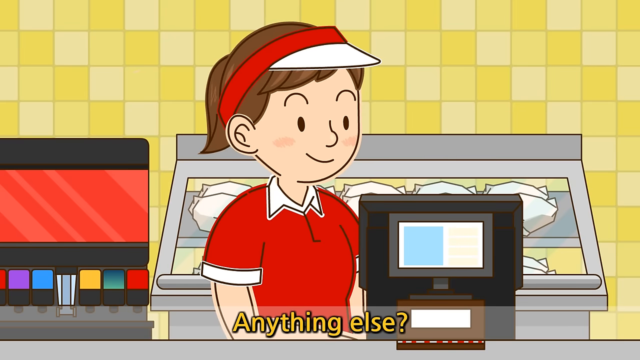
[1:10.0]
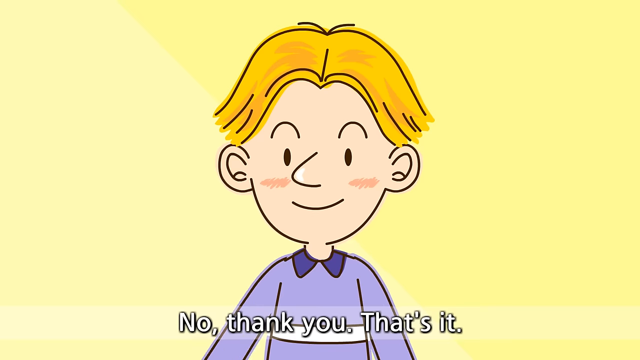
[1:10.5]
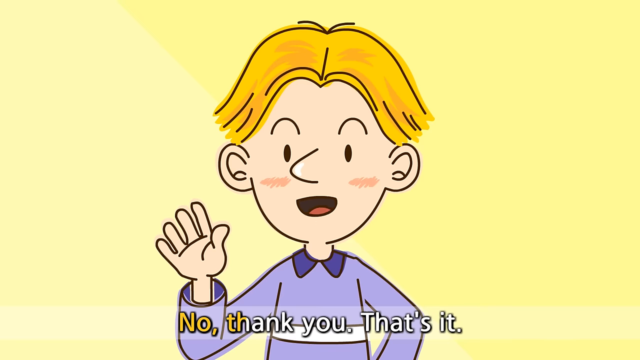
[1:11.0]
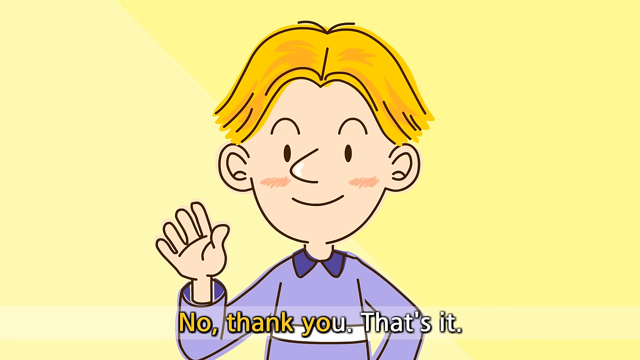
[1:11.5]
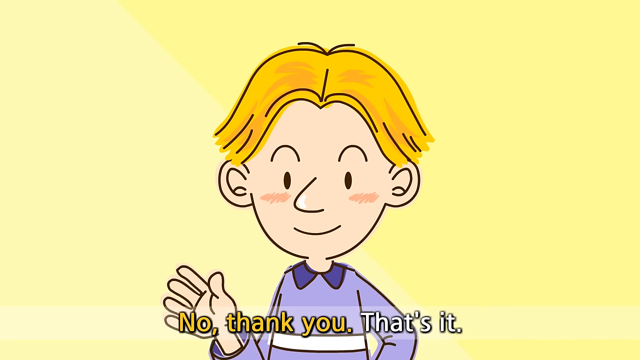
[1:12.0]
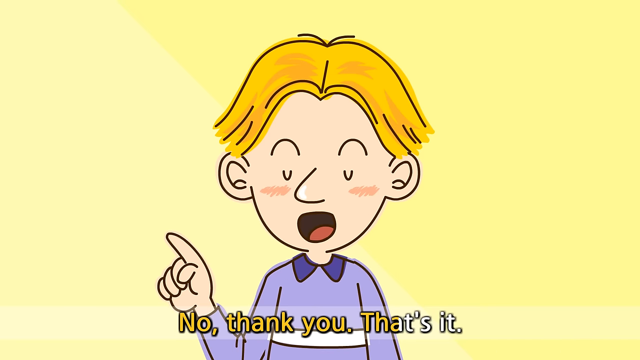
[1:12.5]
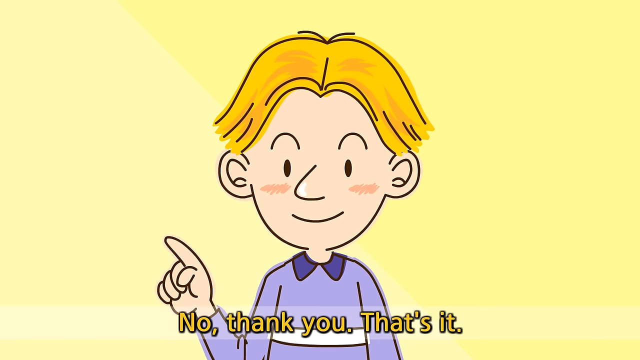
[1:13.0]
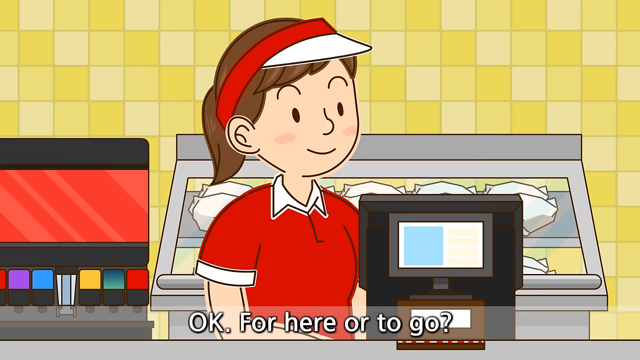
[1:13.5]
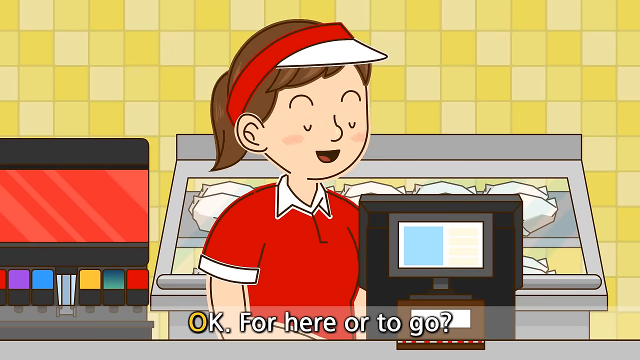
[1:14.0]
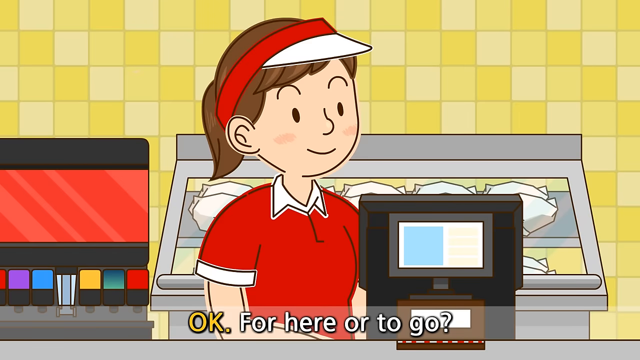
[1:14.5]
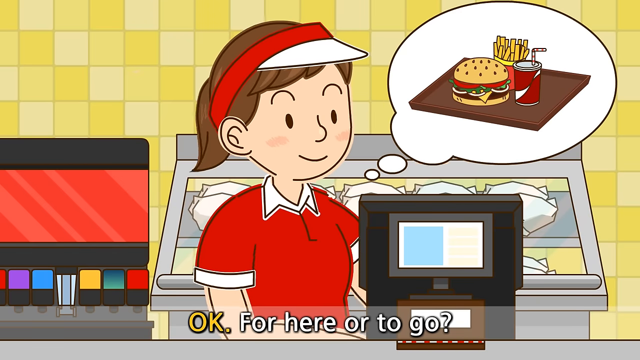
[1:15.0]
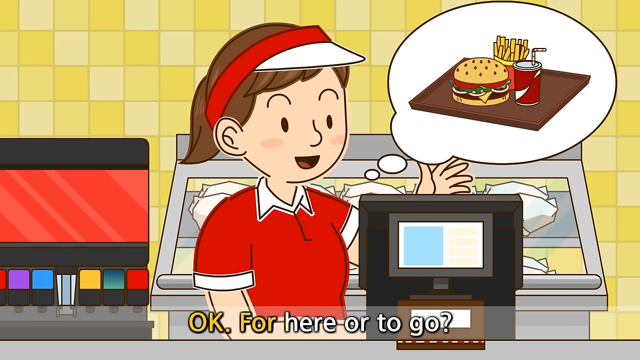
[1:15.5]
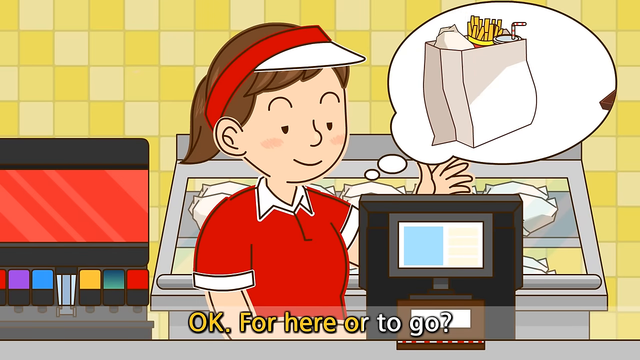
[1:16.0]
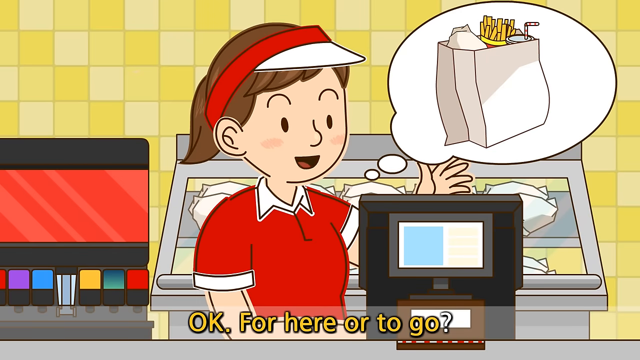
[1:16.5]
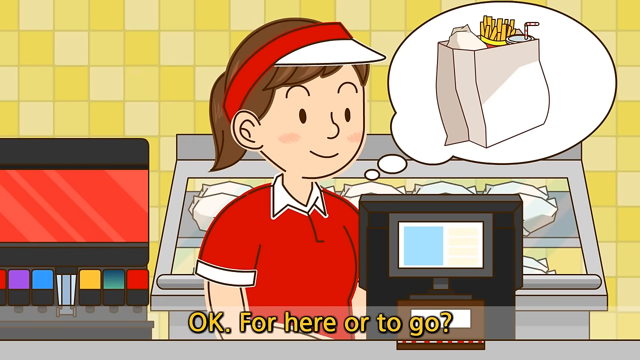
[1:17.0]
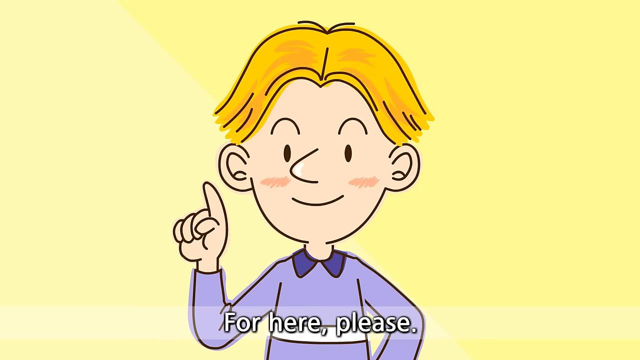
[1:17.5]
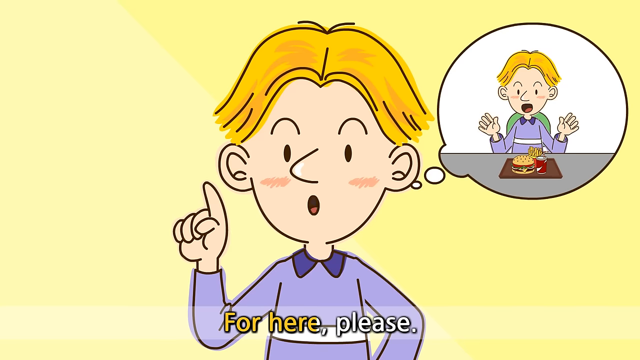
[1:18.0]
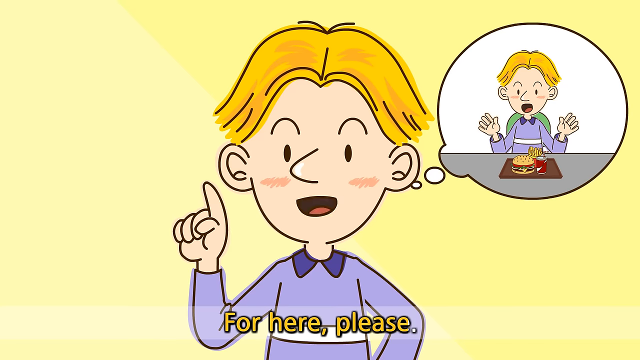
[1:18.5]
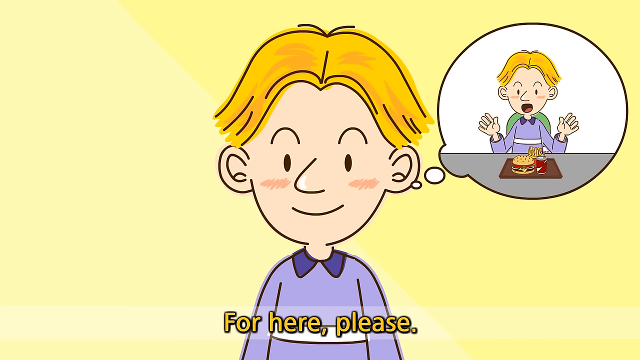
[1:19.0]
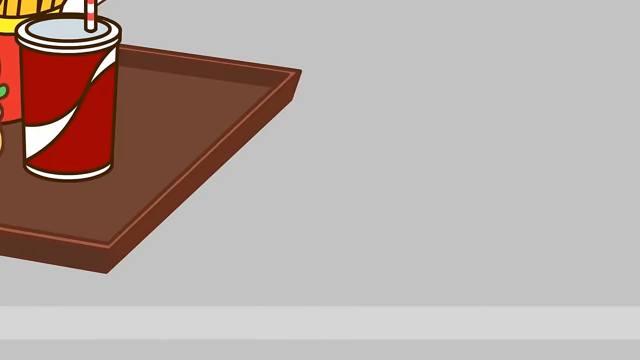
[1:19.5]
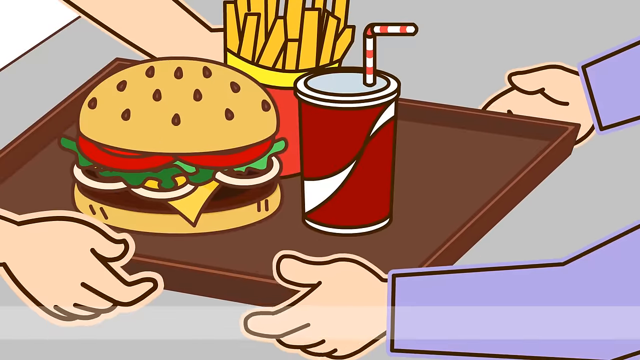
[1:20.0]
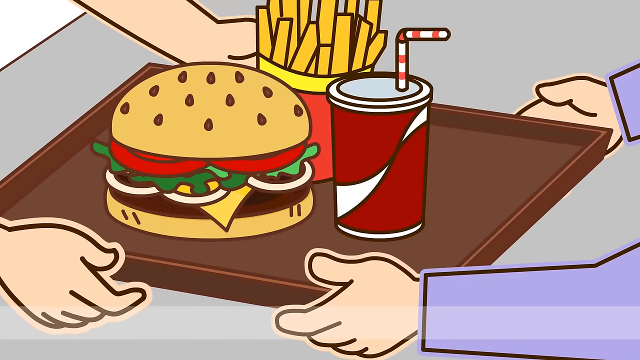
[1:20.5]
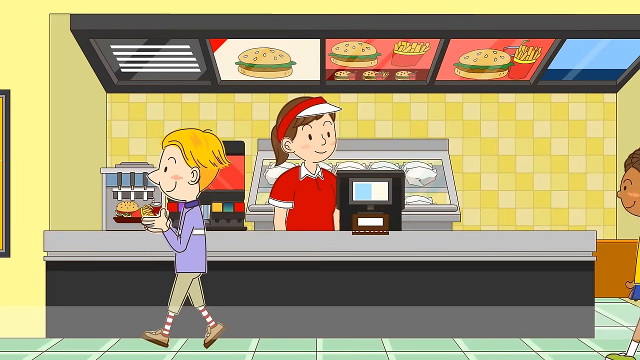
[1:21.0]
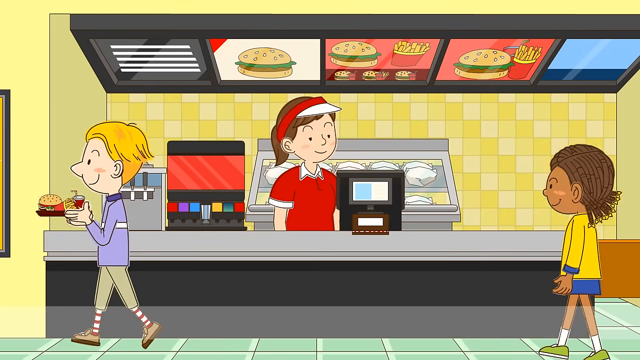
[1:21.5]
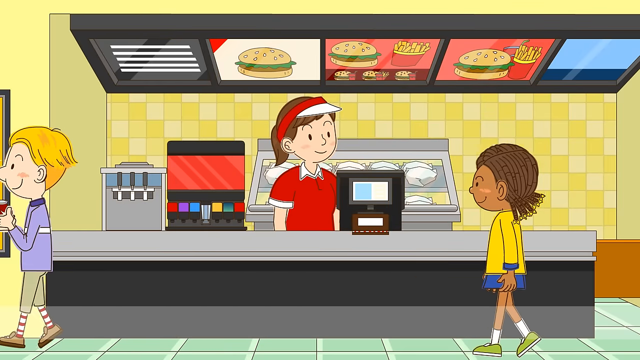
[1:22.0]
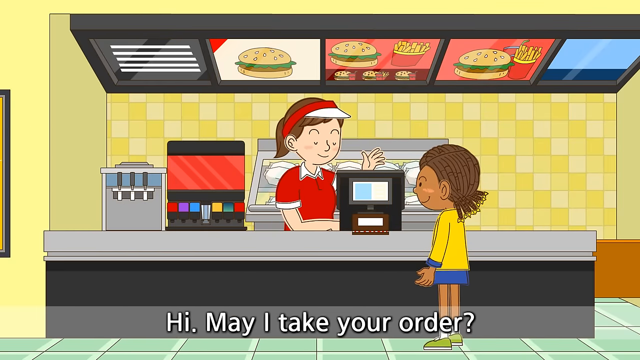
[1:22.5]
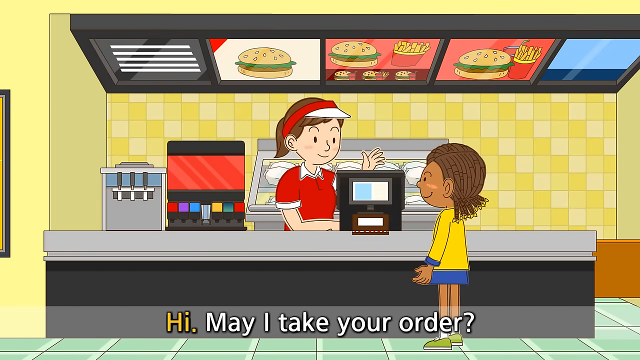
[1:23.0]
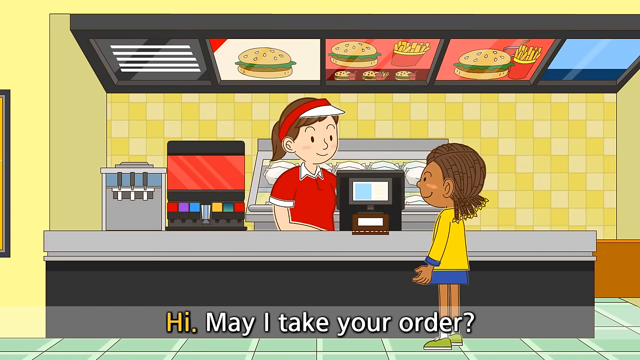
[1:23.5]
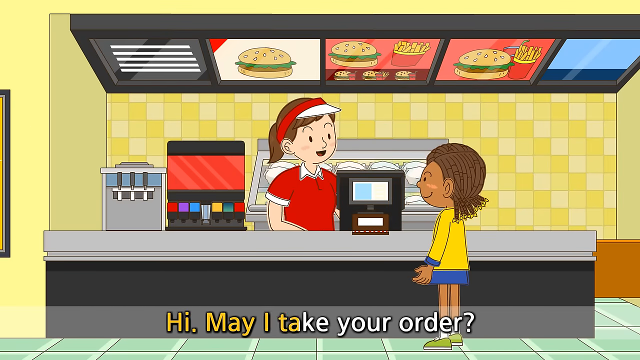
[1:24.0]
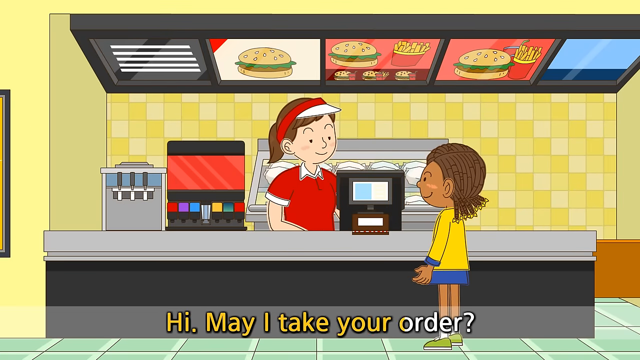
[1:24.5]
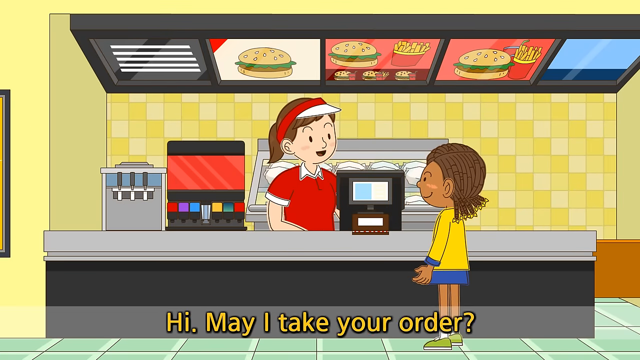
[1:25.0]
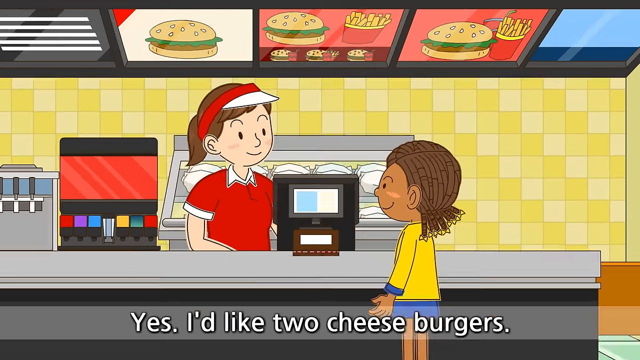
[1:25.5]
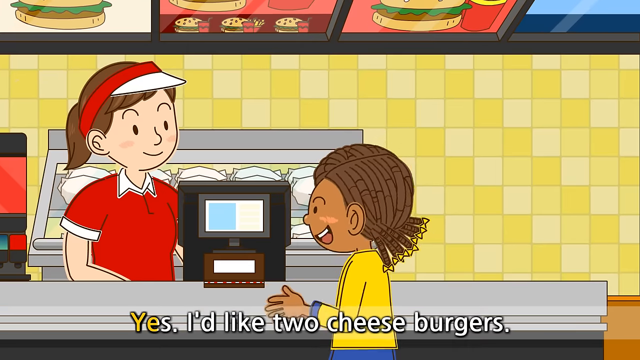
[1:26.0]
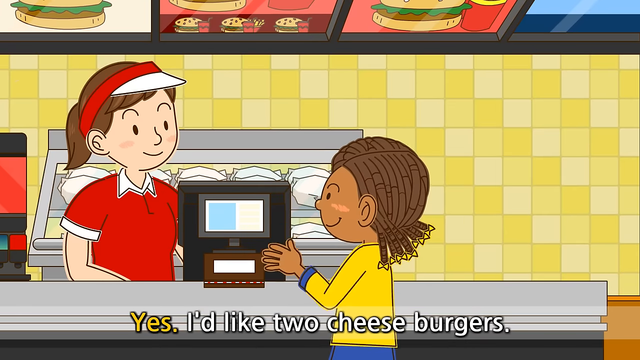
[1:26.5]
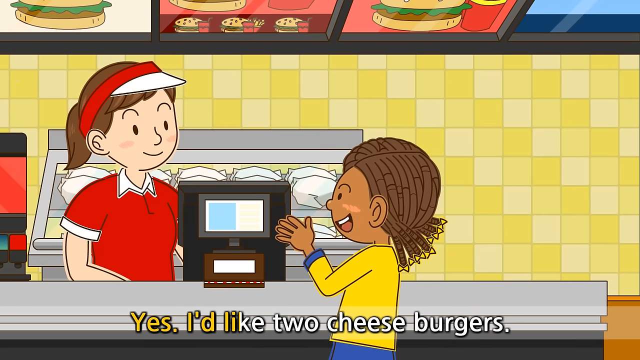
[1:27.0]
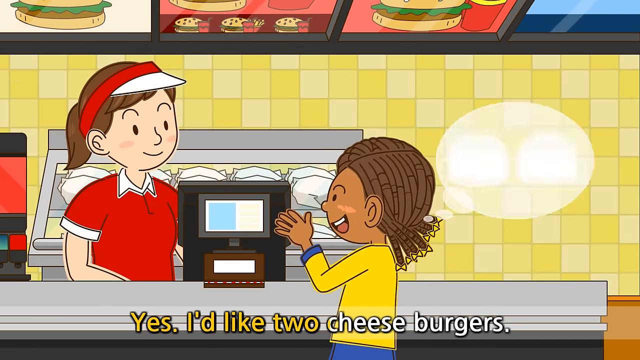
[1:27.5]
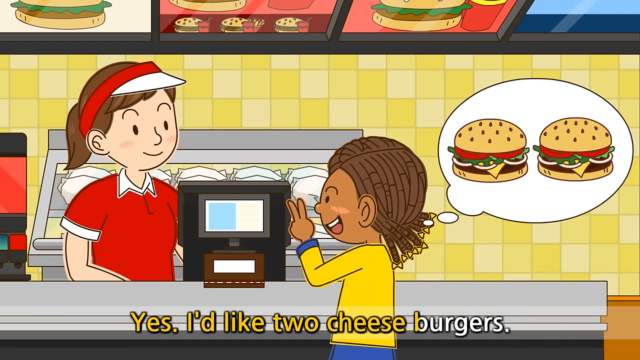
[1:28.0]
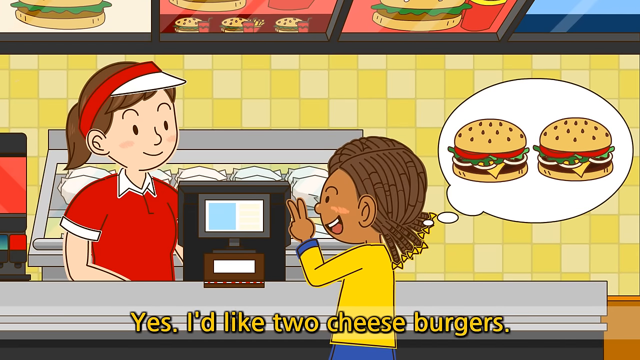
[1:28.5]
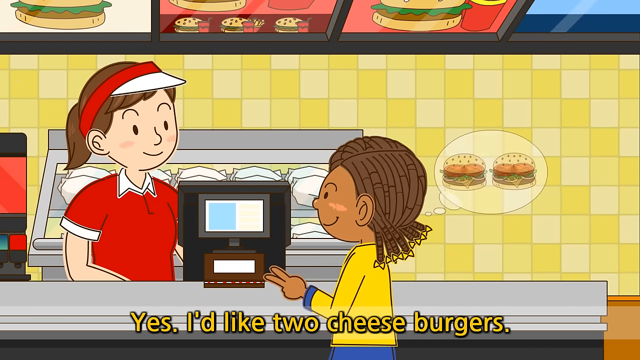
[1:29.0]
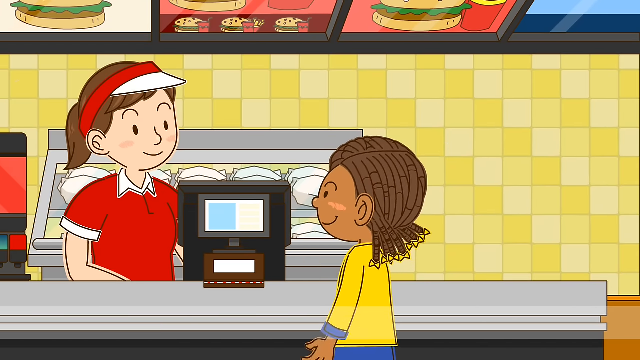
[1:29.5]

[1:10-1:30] In a cartoon, a girl asks one of the characters whether he wants his order to go or to stay at the restaurant; he is staying, so he gets a tray. The next girl orders two hamburgers and, when asked whether it is for here or to go, says she would like to take it to go, so she gets her order in a bag instead. The tray is brown, and the hamburger has lettuce, ketchup, mustard, onions and some cheese. The worker wears what looks like a visor and has brown hair pulled back in a ponytail. The cash register is black and gray, and its screen is blue on the left side and white on the right side.